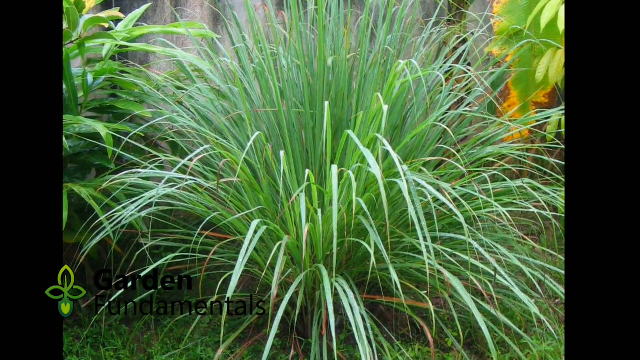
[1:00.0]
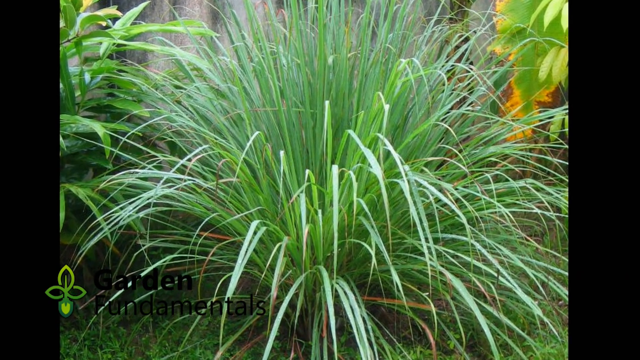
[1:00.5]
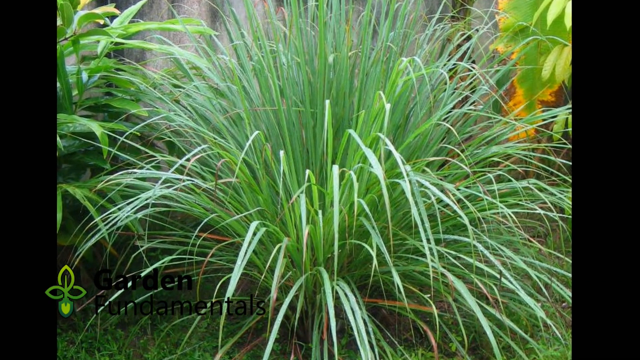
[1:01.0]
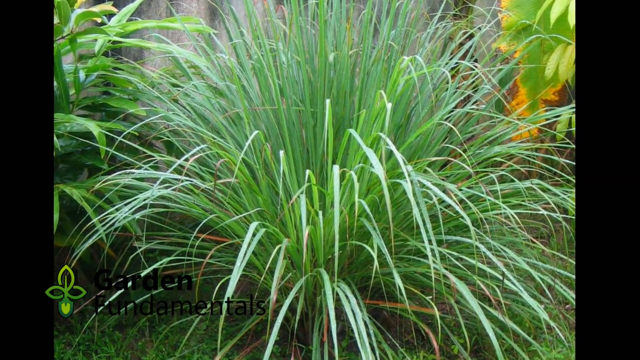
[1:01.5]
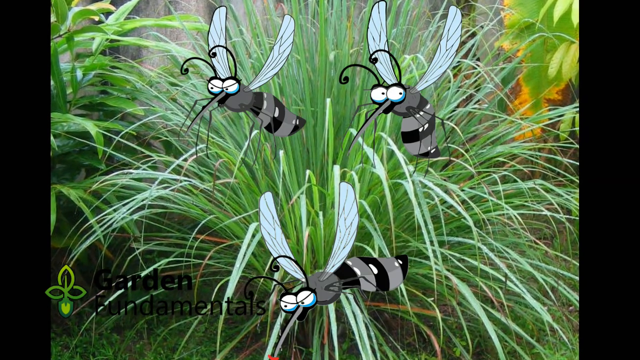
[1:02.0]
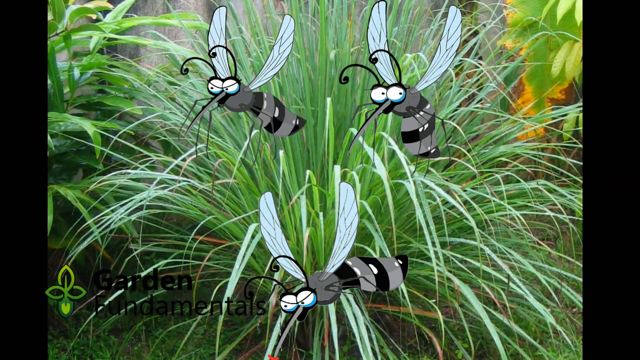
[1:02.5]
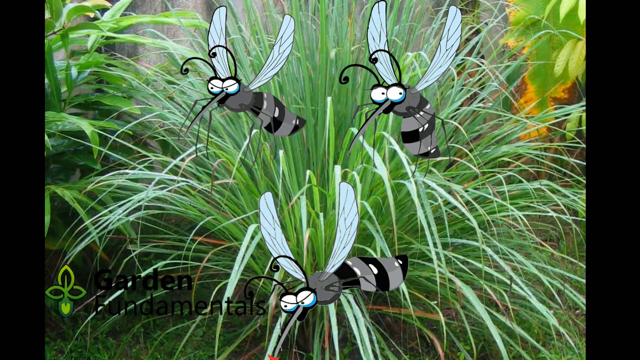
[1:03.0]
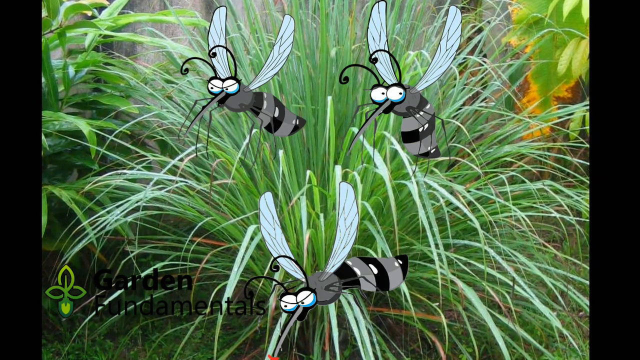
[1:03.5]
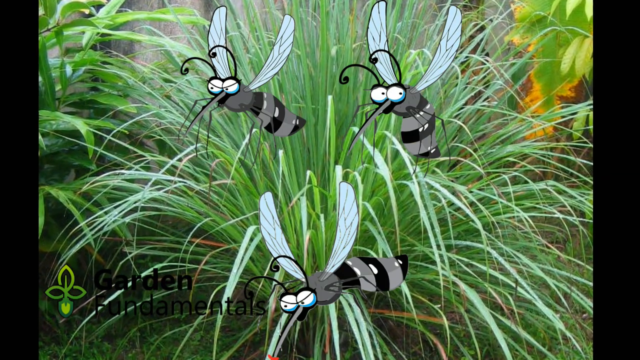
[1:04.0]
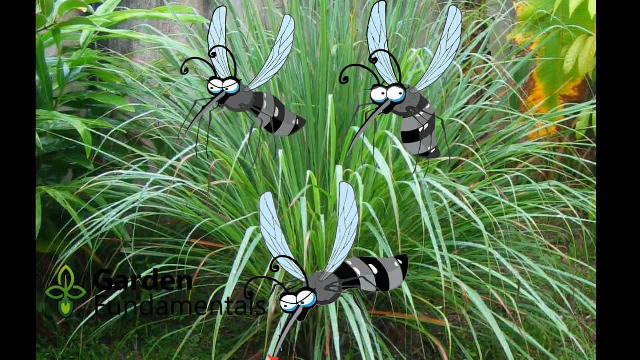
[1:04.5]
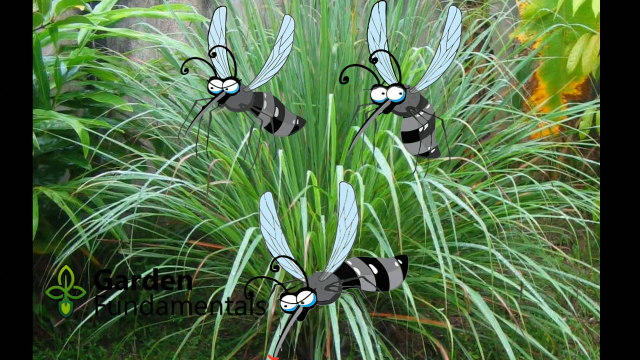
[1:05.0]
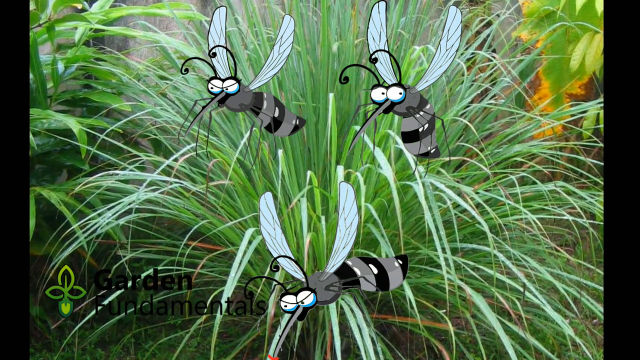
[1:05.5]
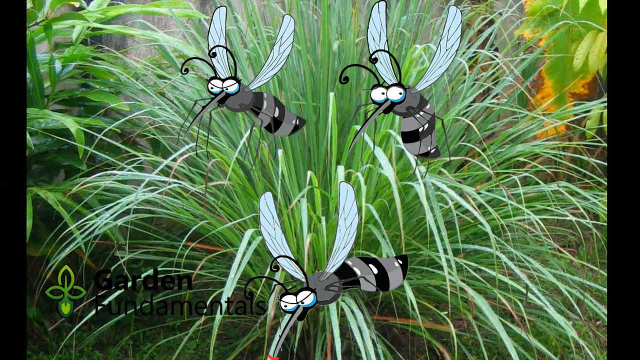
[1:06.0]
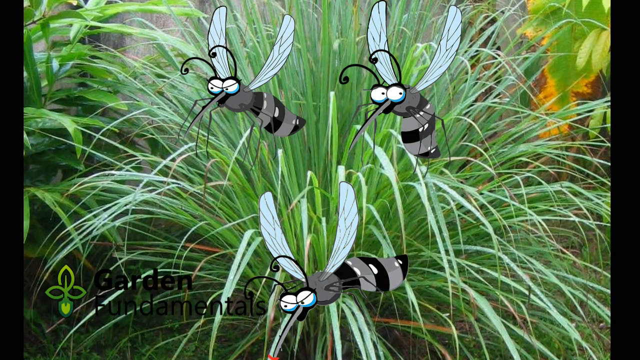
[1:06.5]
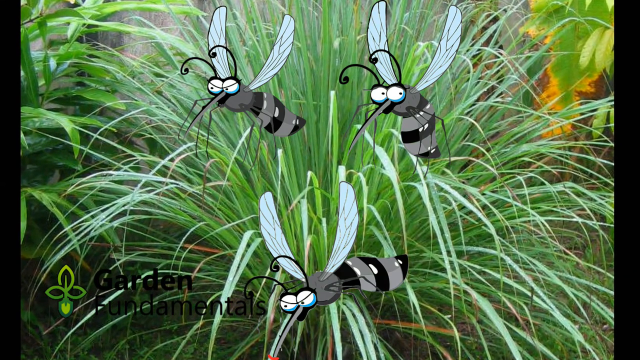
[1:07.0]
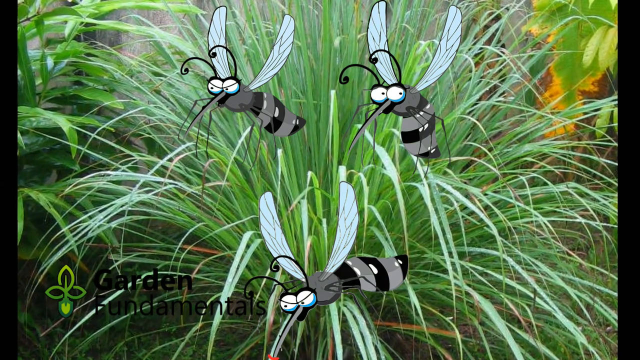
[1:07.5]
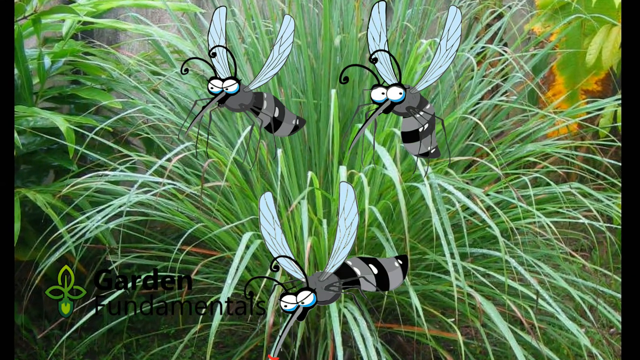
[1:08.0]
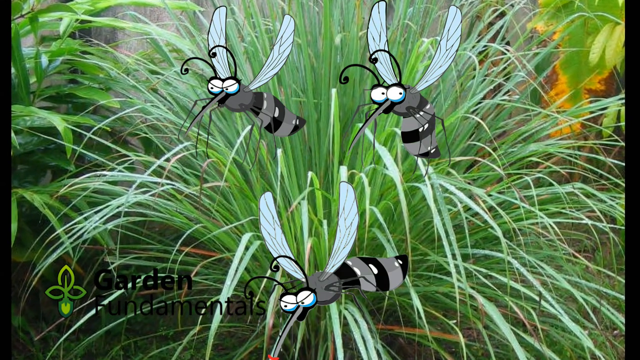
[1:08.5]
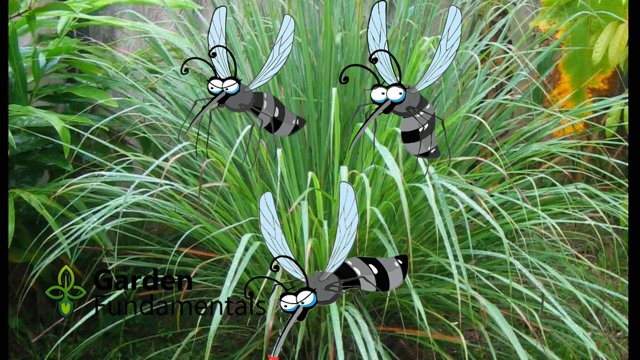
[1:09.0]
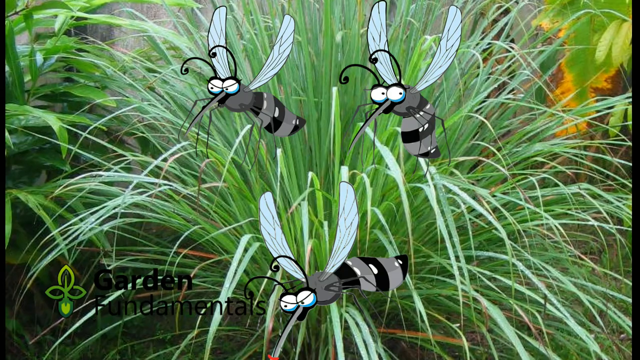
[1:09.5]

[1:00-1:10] The picture of lemongrass is still slowly being zoomed into when three cartoon mosquitoes suddenly pop up, two on the top and one on the bottom. They are very cartoony, with long proboscises, two antennae, kind of cartoony eyes, skinny wings, and gray and black stripes. The zoom into the background picture continues, but the mosquitoes stay the same size, static on the screen and not moving at all.